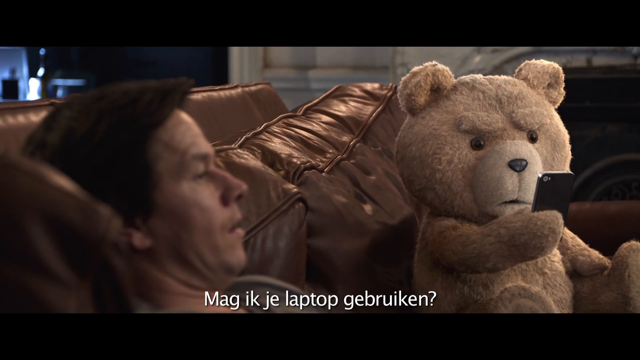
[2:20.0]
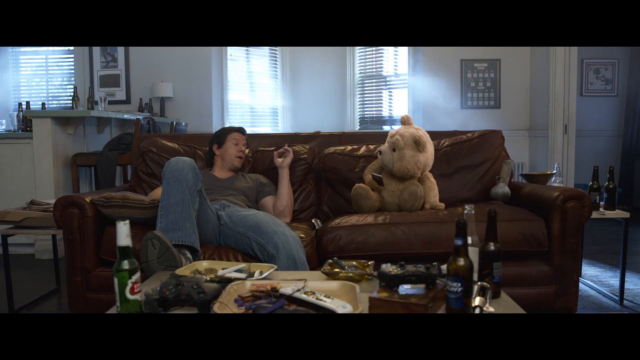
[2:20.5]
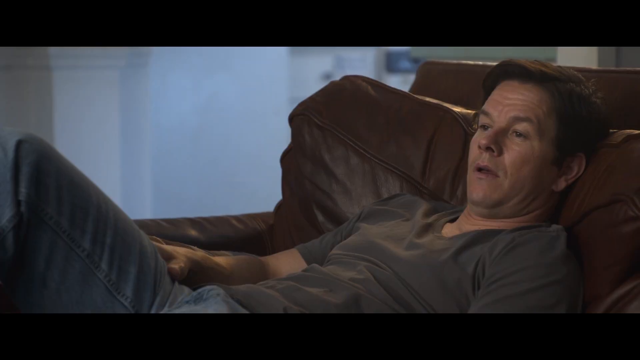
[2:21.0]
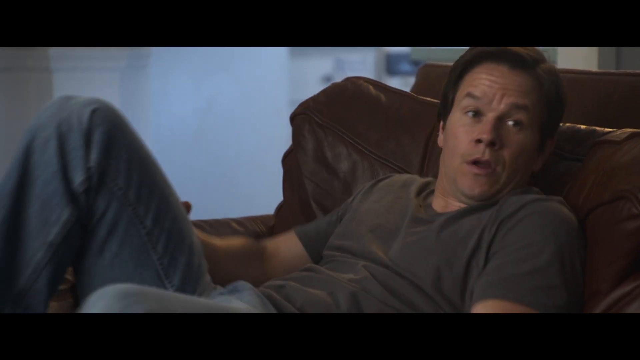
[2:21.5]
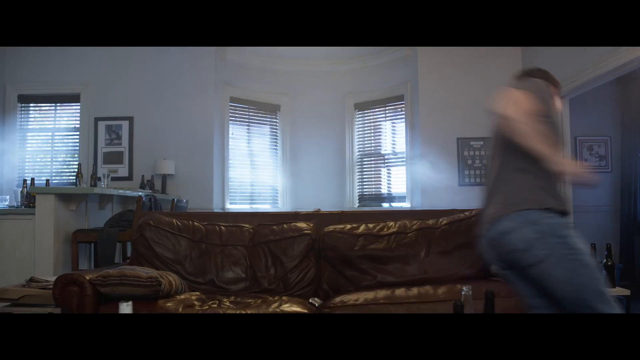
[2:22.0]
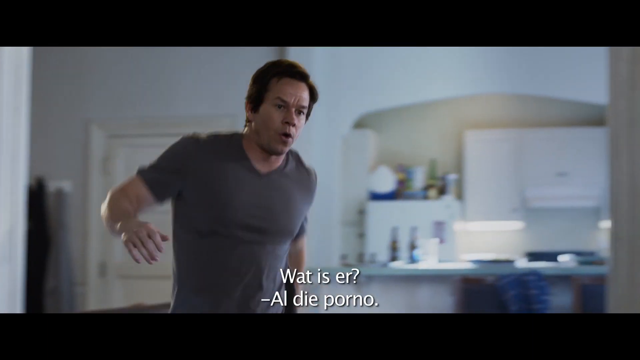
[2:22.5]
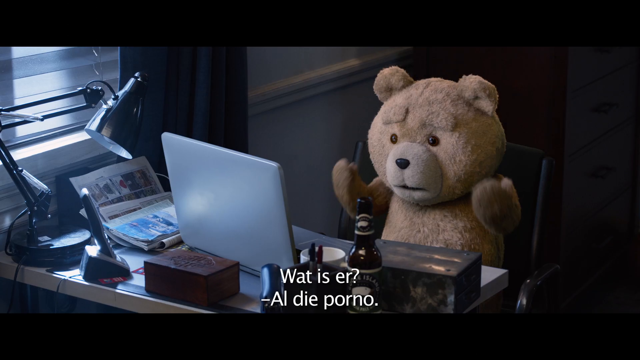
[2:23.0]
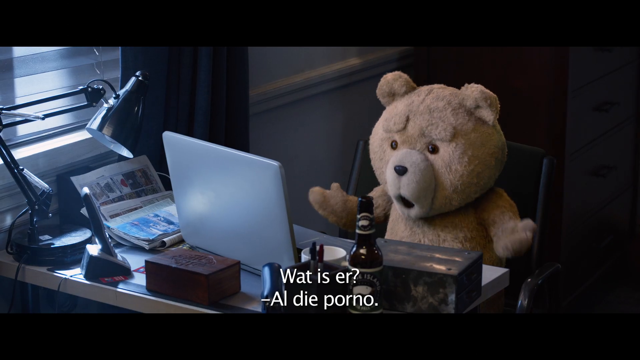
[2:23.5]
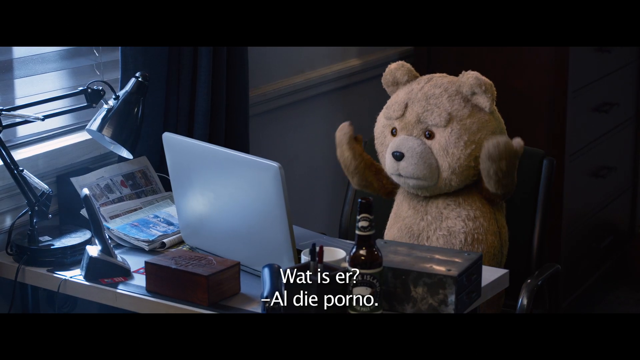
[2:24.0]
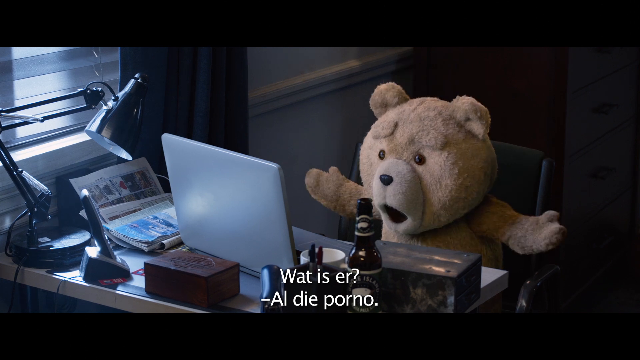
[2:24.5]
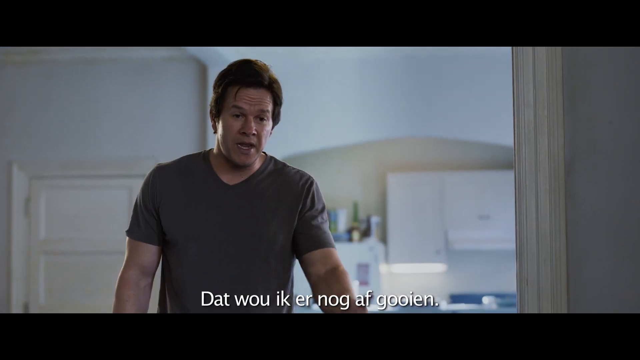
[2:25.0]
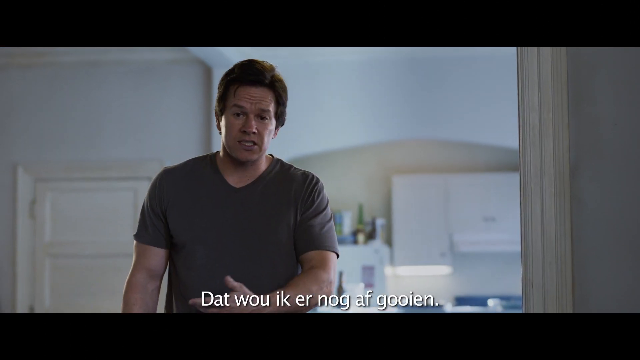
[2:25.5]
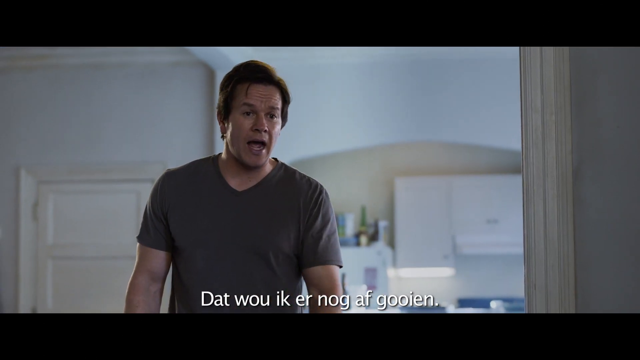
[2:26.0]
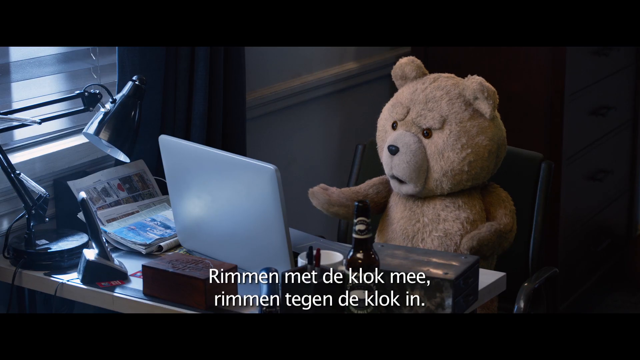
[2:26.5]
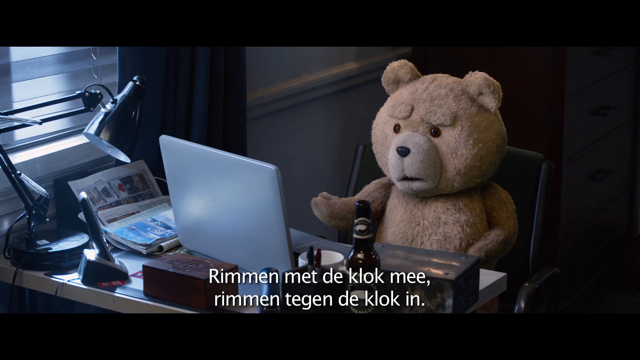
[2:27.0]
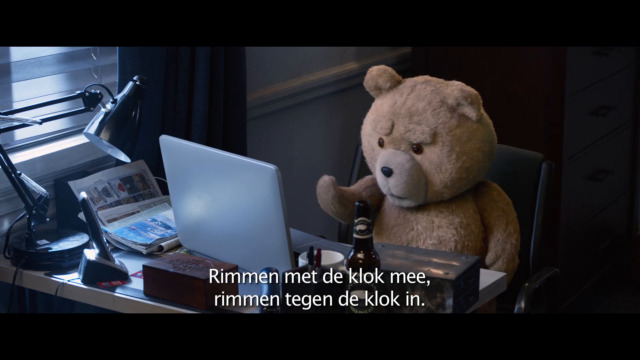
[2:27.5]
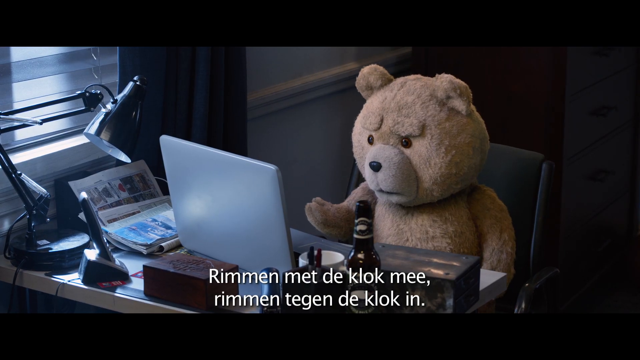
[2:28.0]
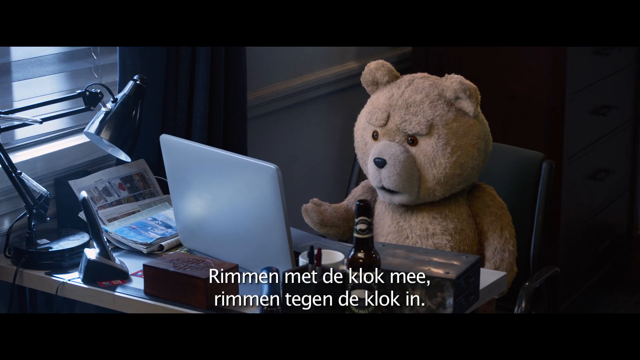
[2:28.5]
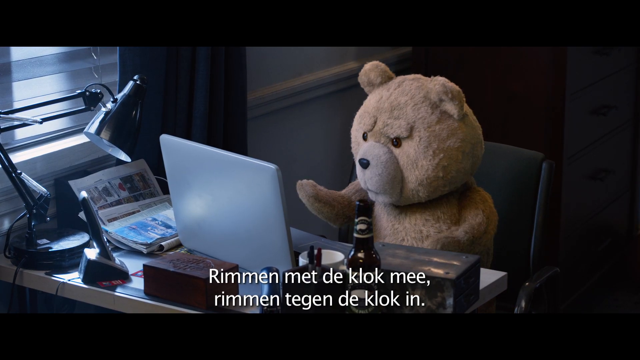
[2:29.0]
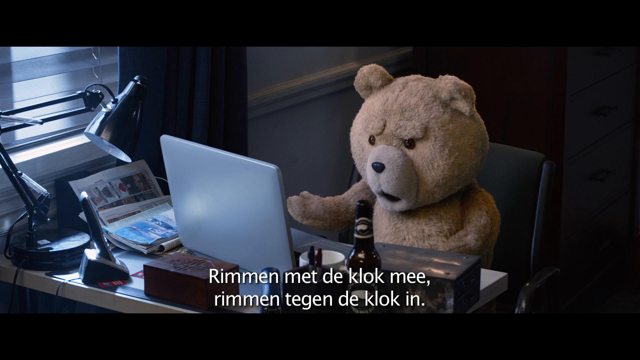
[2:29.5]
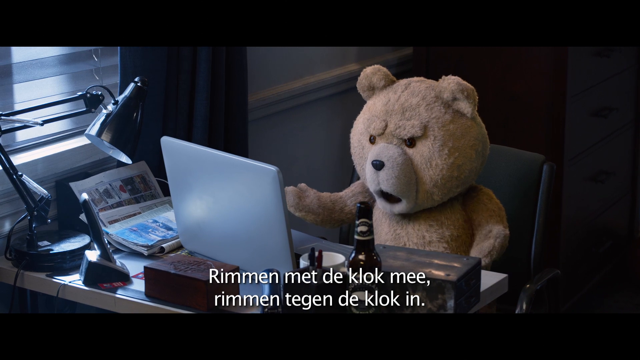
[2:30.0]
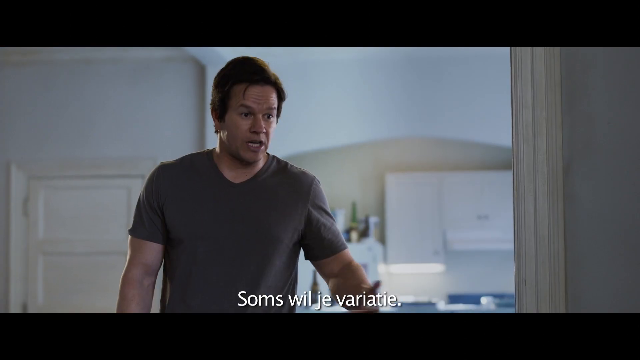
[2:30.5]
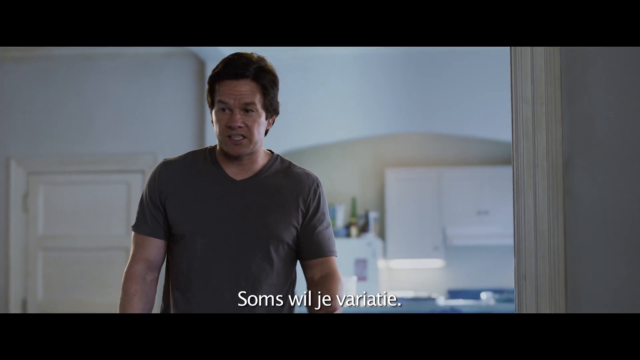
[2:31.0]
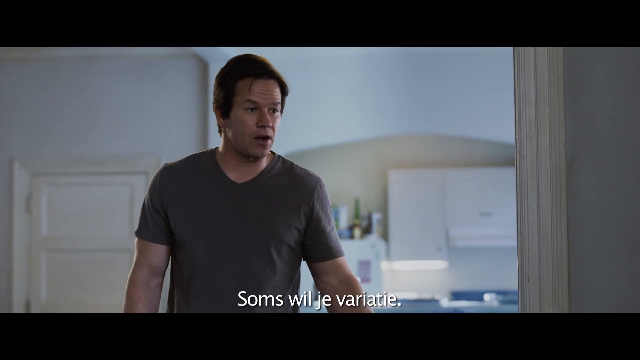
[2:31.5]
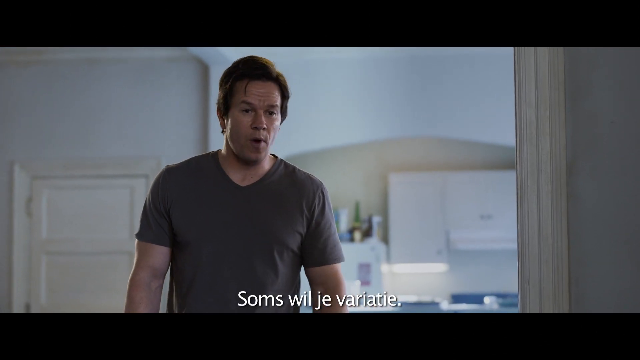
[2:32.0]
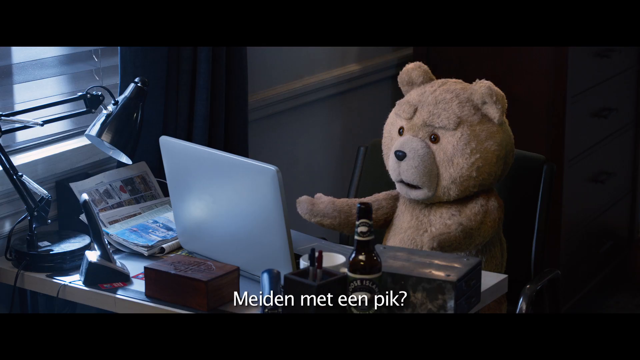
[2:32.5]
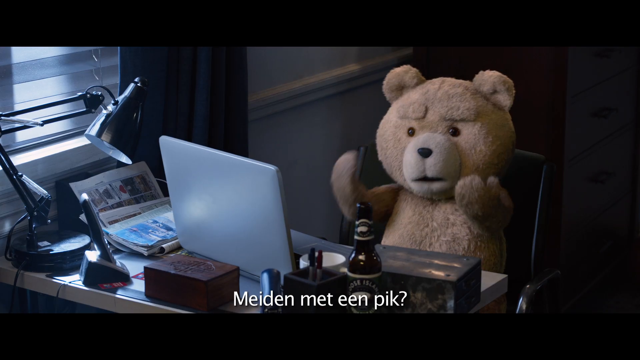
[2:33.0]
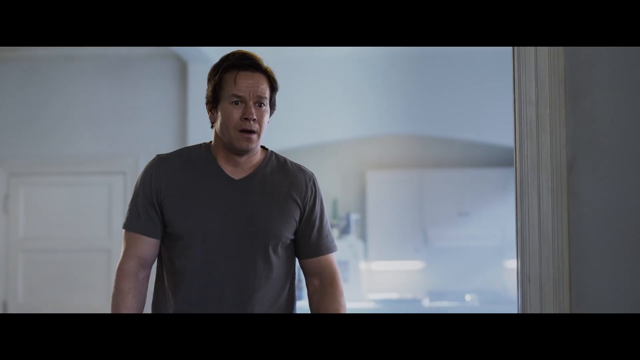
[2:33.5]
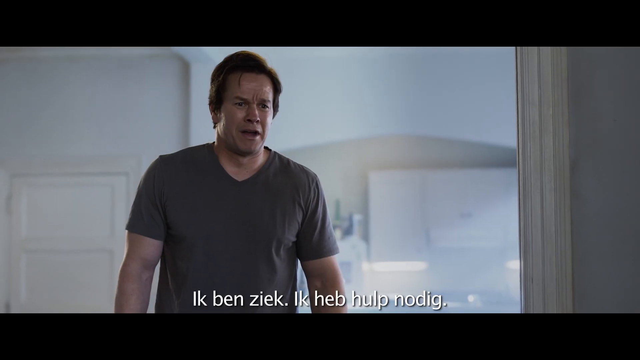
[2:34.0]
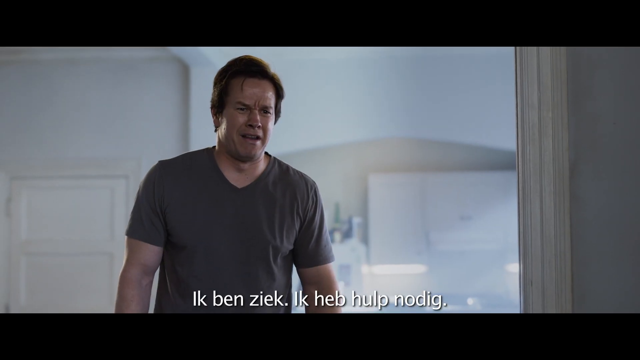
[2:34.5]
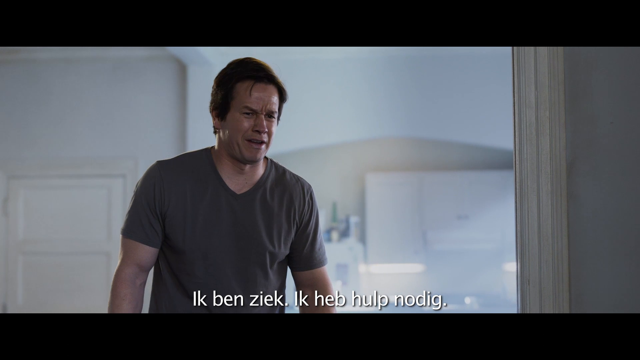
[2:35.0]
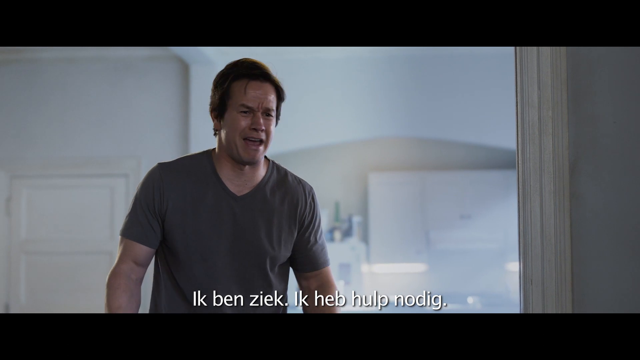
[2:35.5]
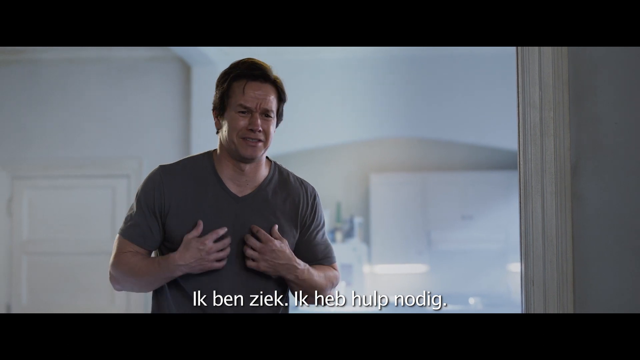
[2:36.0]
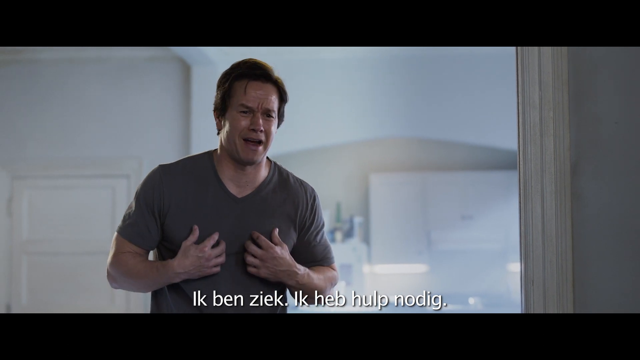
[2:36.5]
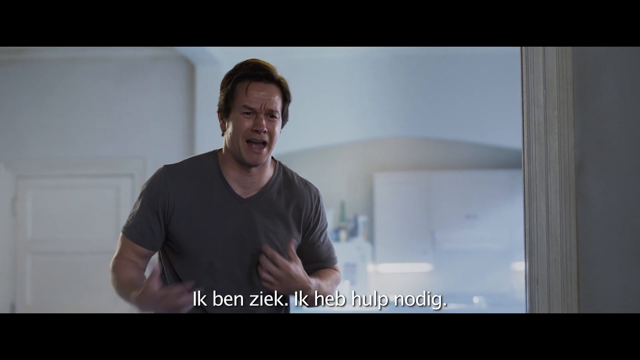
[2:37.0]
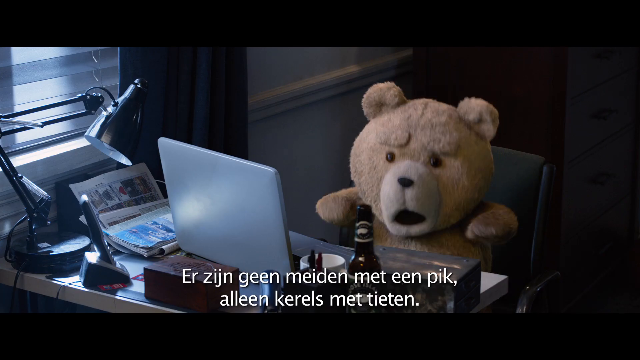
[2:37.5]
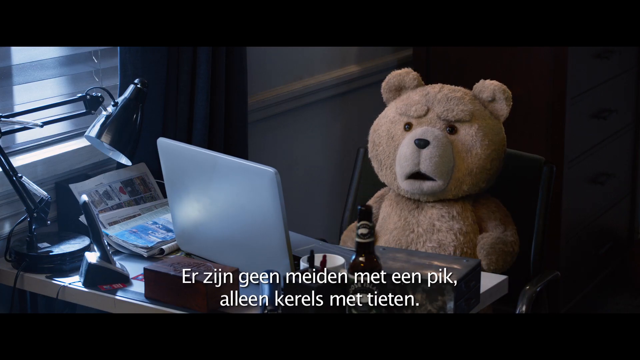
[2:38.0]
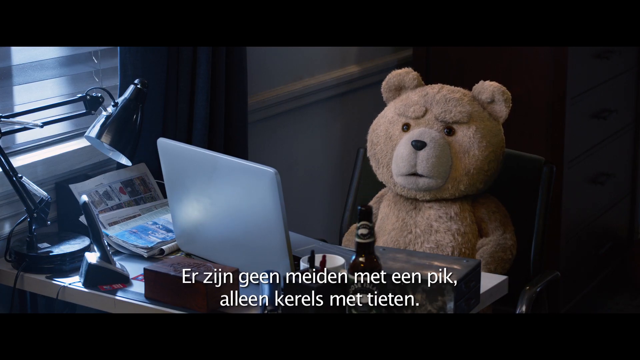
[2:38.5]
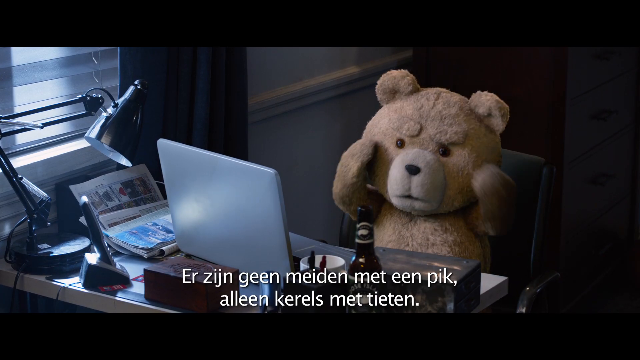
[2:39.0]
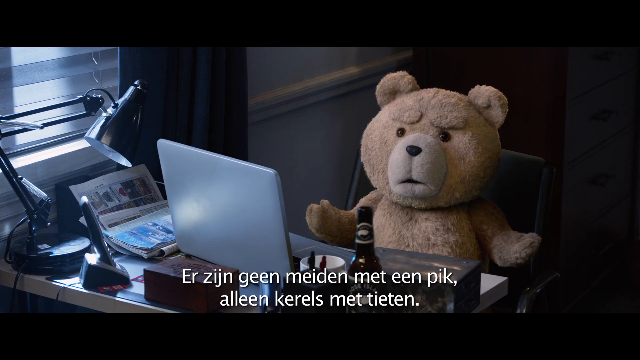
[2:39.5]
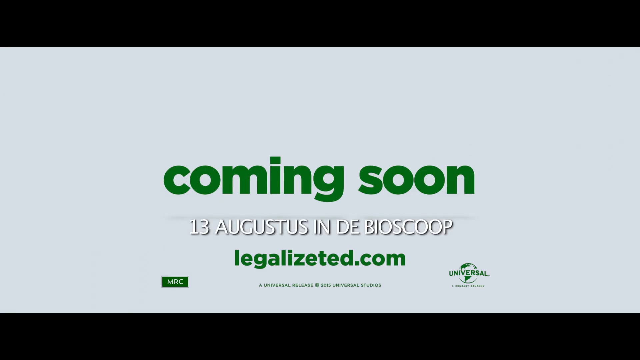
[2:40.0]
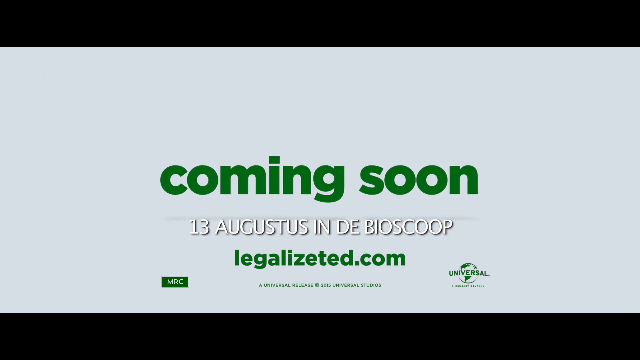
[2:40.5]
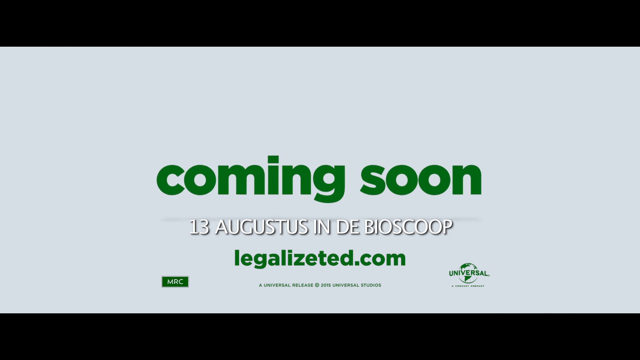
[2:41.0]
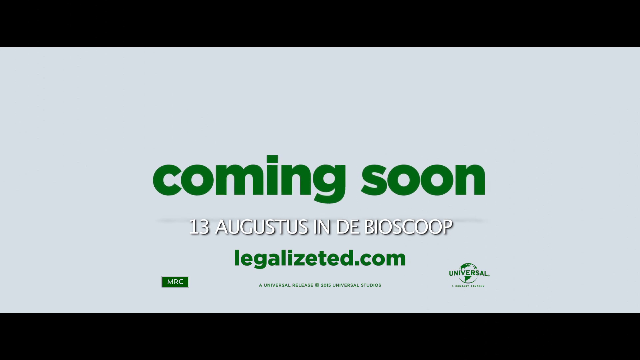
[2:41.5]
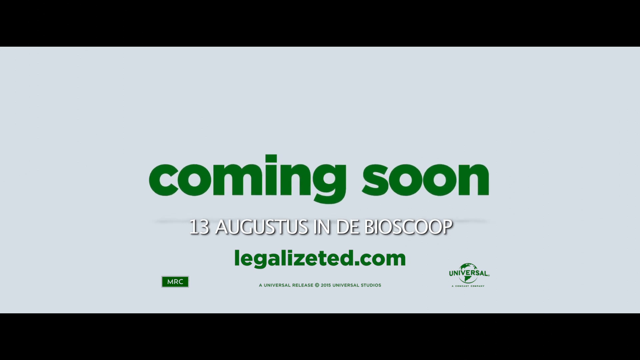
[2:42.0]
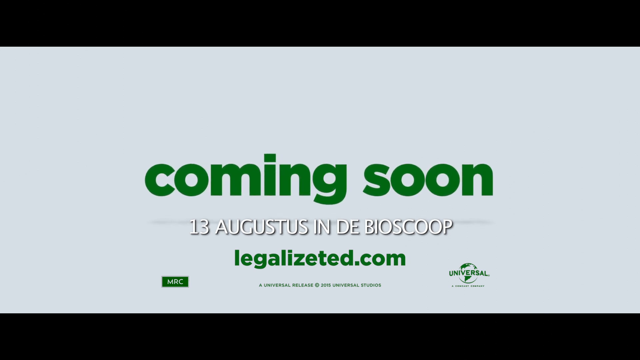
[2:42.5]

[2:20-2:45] The actor and the teddy bear appear to be back on the brown couch, talking to each other; the teddy bear seems to hold a cell phone in his right hand. The white German subtitles are still at the bottom. After back-and-forth shots on the couch, Mark Wahlberg stands up and walks over to the teddy bear, who is at a laptop, followed by more back-and-forth shots of each of them. Then green text on a white background reads "coming soon". Beneath it, smaller white capital text gives the release date in German, and beneath that, small green letters read "legalizeted.com". A small Universal logo is at the lower right and a small MRC logo, a rectangle with white letters, is at the lower left. Very tiny green lettering runs along the very bottom.